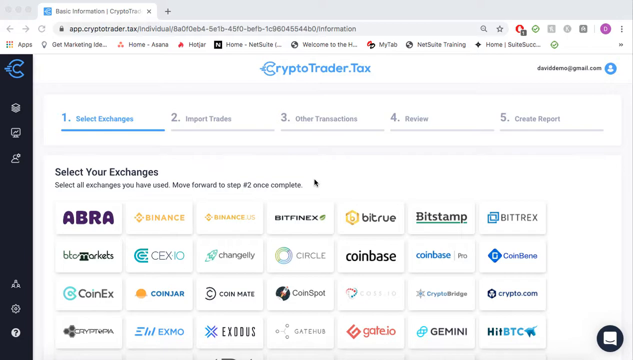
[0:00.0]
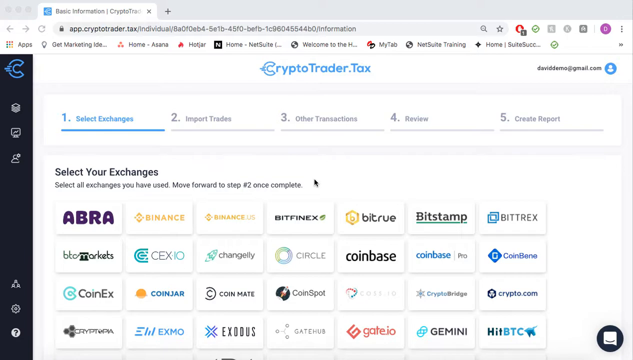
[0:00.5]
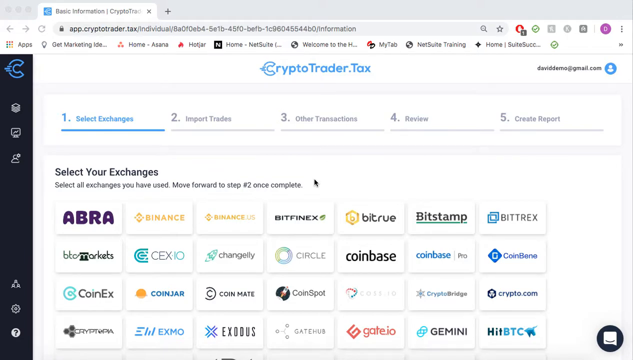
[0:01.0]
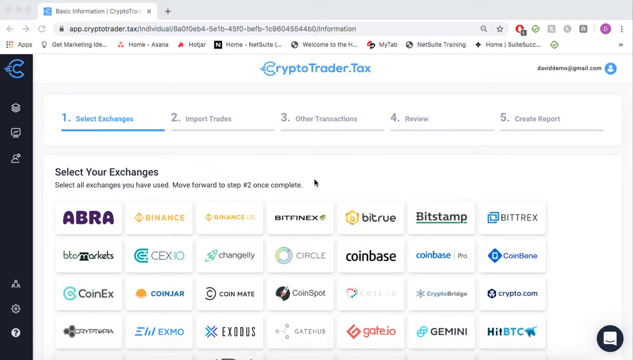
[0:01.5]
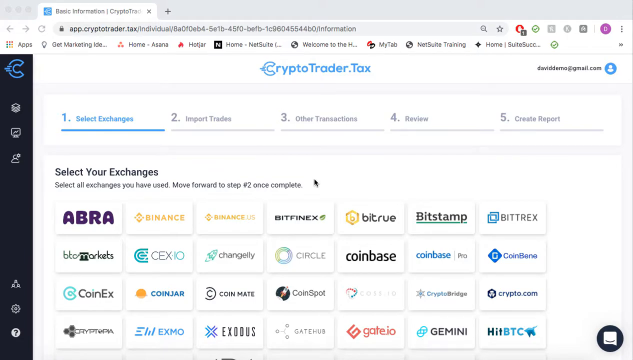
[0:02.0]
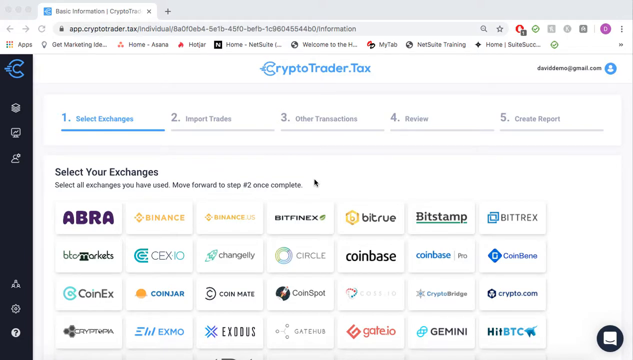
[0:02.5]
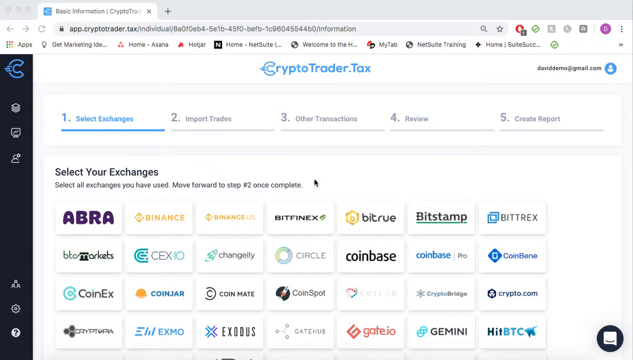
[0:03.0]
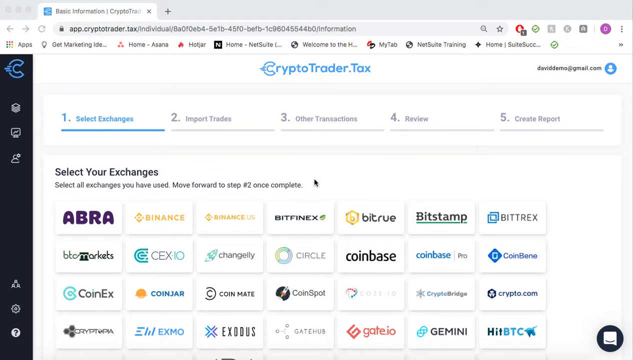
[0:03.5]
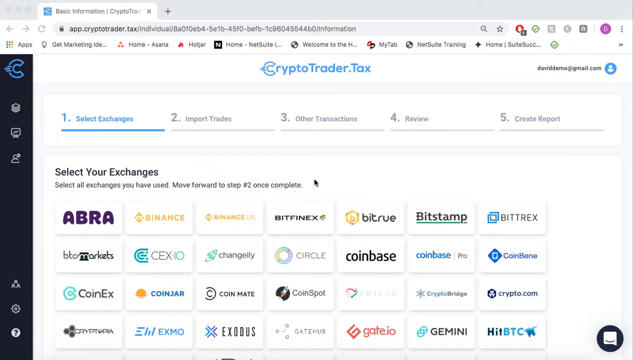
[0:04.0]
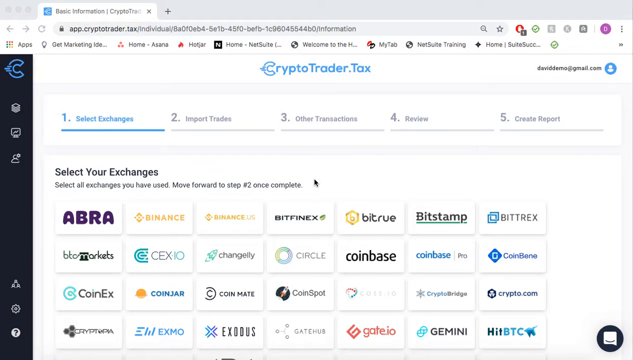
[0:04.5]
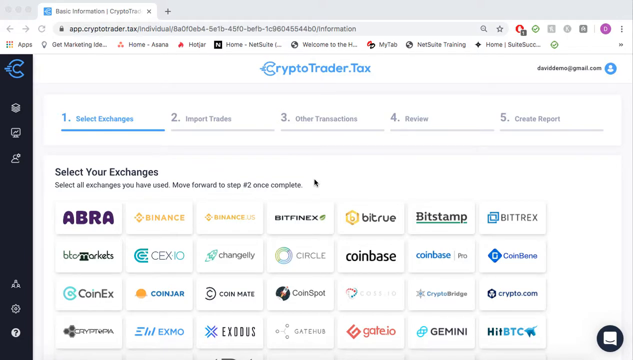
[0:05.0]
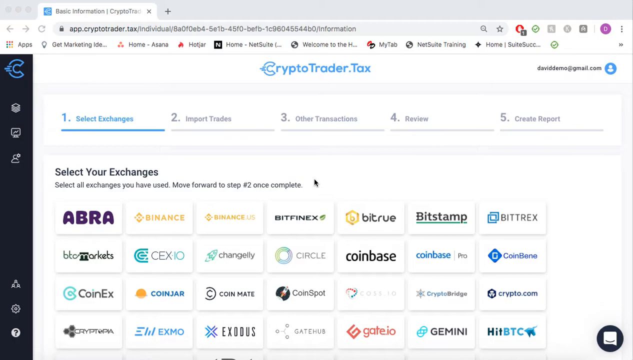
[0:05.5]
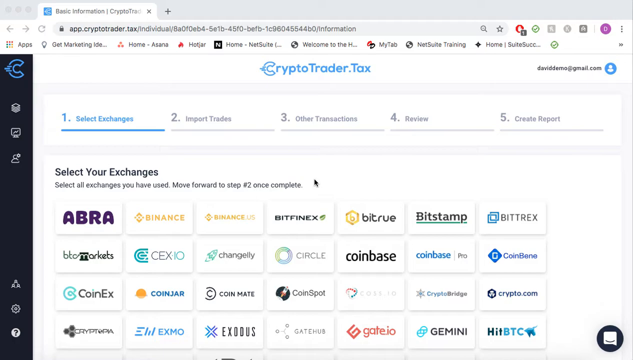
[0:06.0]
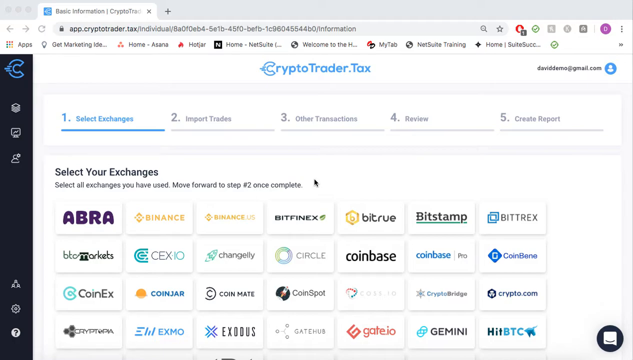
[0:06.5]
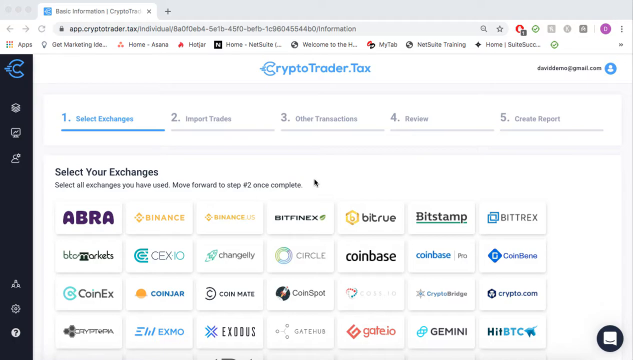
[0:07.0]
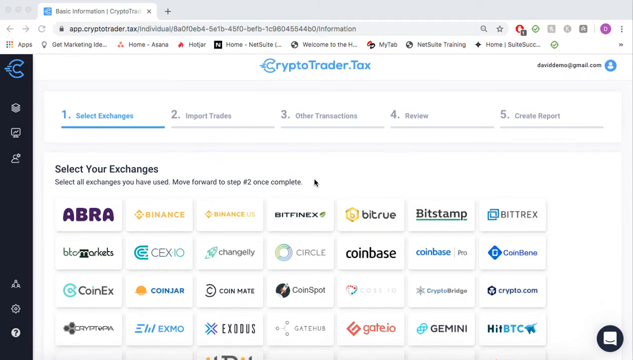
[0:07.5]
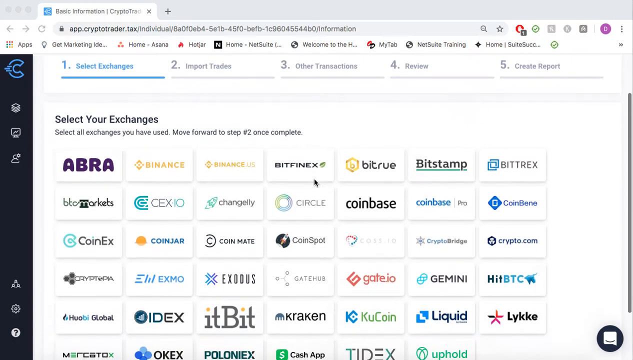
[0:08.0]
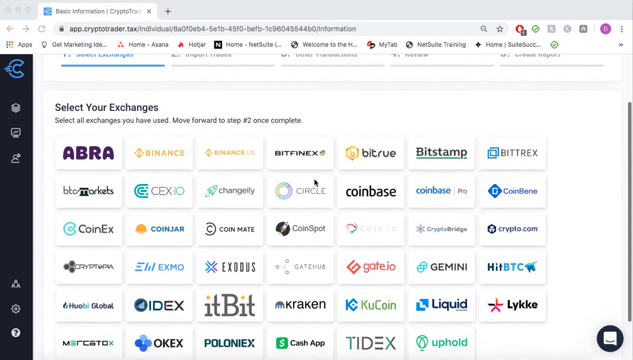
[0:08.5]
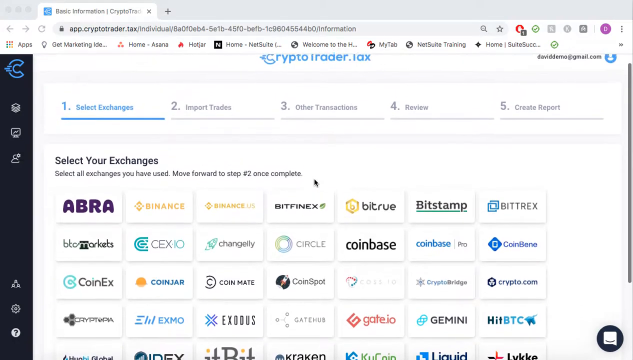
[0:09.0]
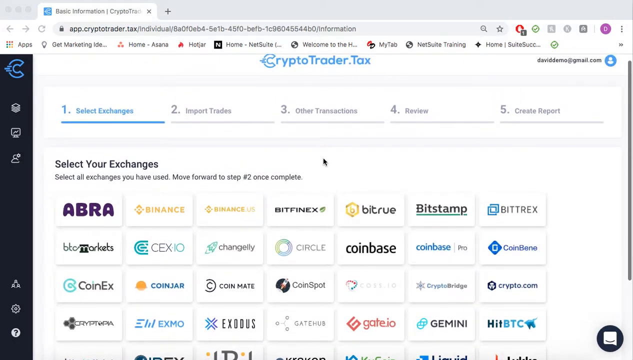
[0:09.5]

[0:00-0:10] A web page shows a dashboard on a platform called CryptoTrader.tax. The simple dashboard first shows five options: "Select Exchanges", "Import Trades", "Other Transactions", "Review" and "Create Report". "Select Exchanges" is currently open, offering various exchanges such as Abra, Binance, Binance US, Bitfinex, Bitrue, Bitstamp, Bittrex, Cexio, Circle, Coinbase, Coinbase Pro and Coinex, among many others. At the top right, the currently connected user is shown as "Daviddemo.com".